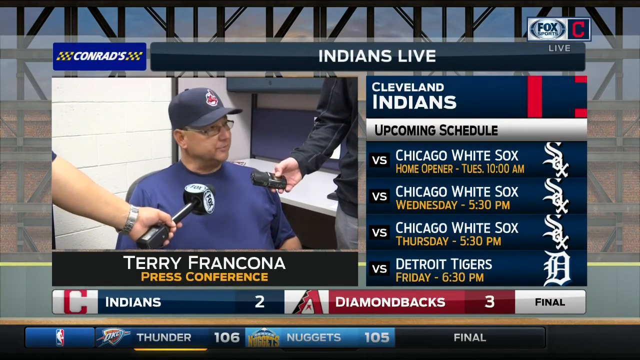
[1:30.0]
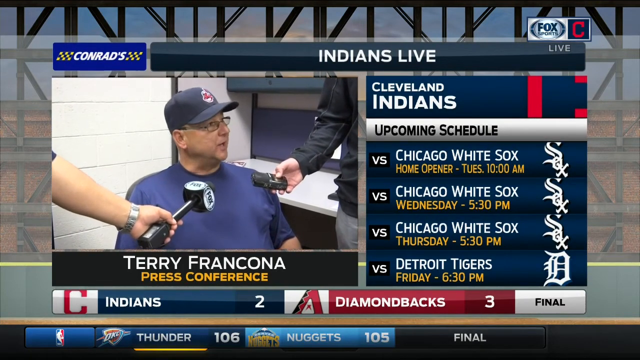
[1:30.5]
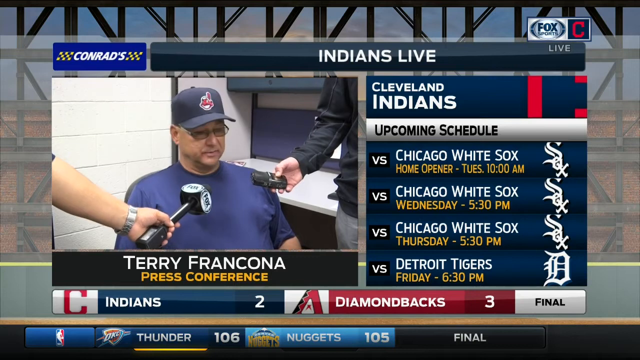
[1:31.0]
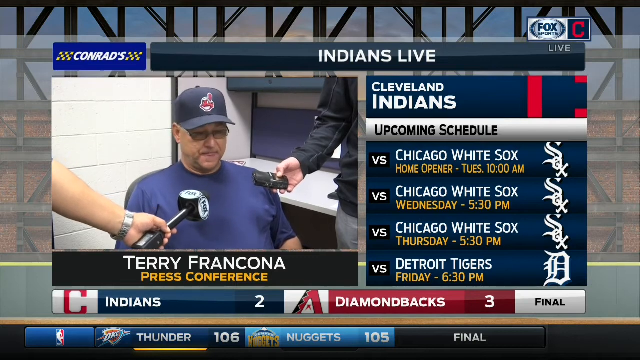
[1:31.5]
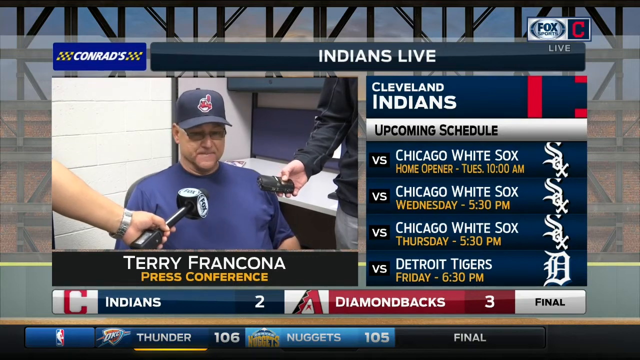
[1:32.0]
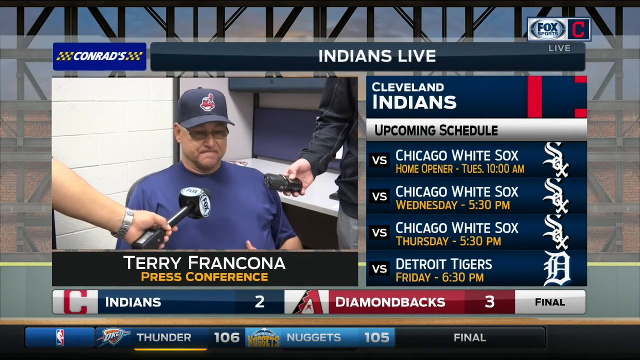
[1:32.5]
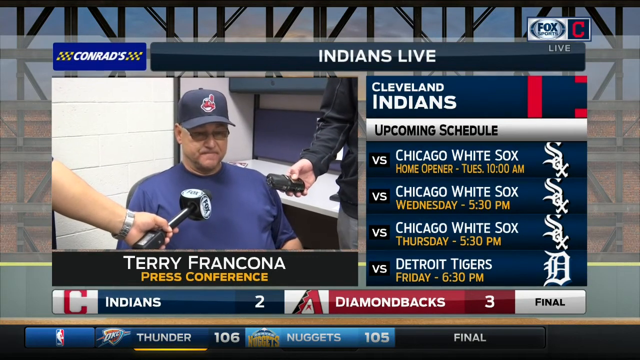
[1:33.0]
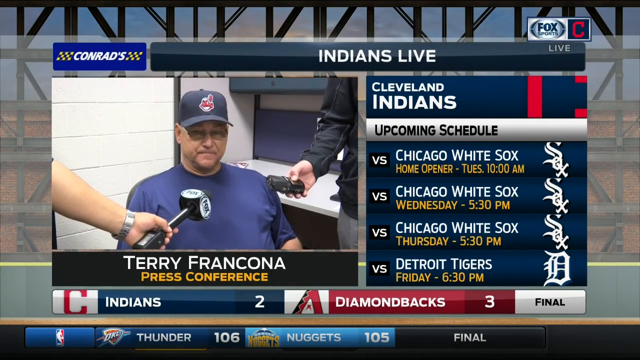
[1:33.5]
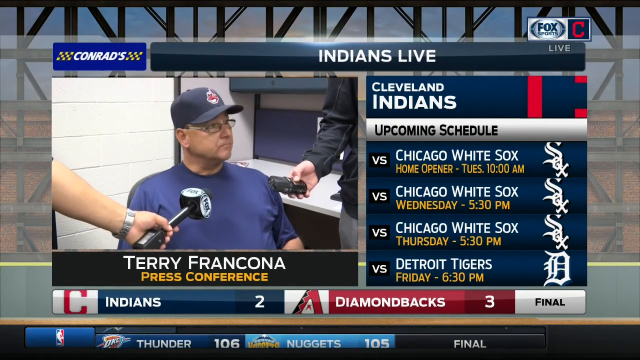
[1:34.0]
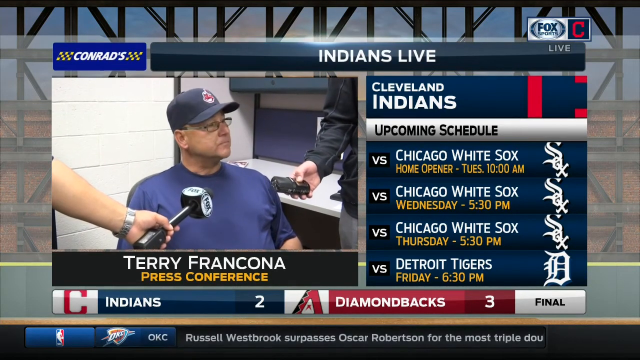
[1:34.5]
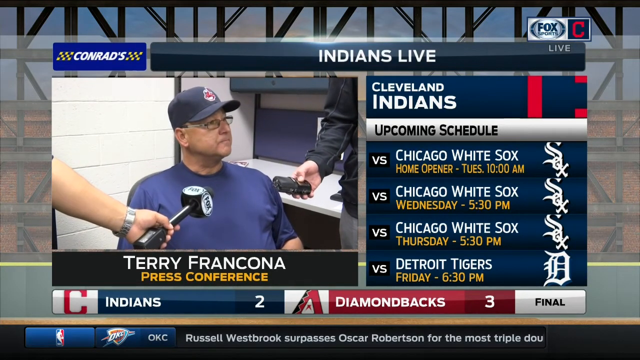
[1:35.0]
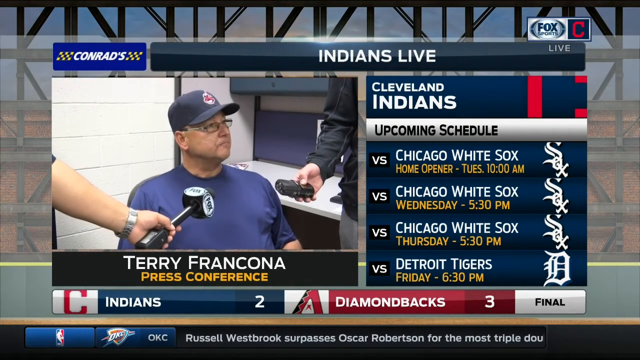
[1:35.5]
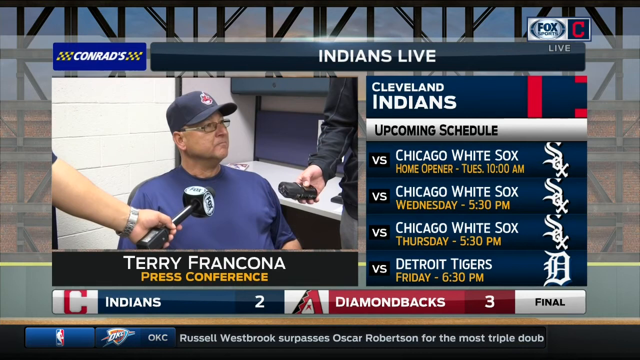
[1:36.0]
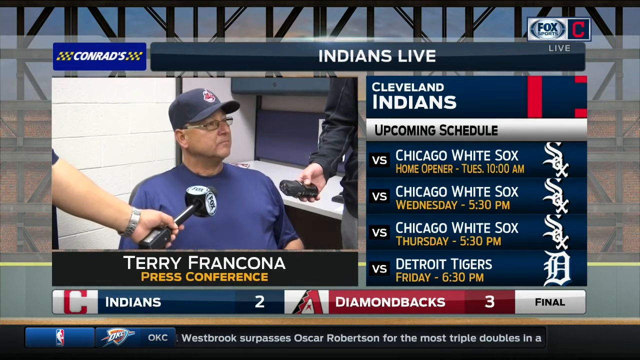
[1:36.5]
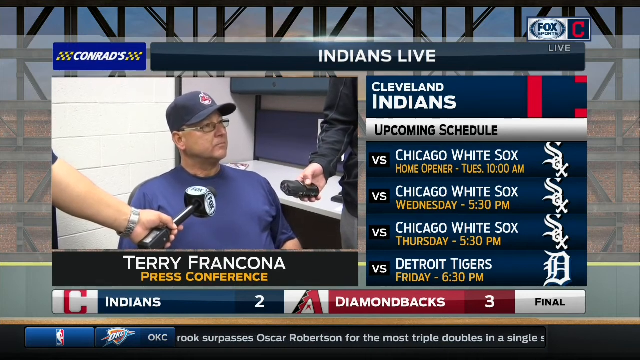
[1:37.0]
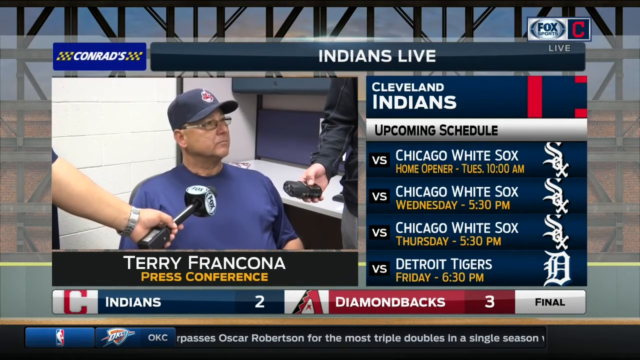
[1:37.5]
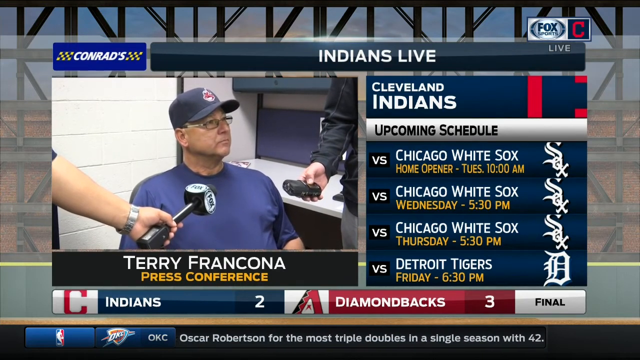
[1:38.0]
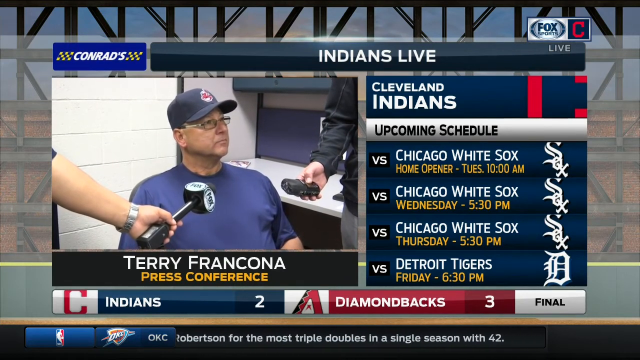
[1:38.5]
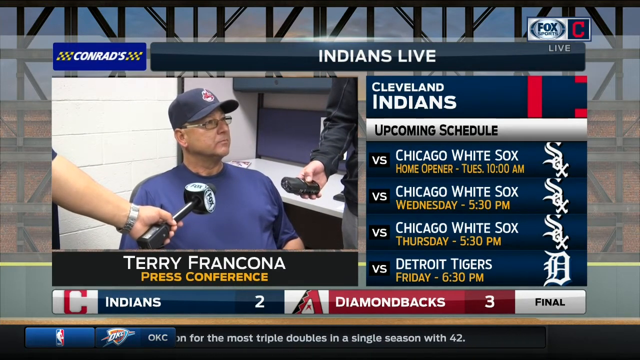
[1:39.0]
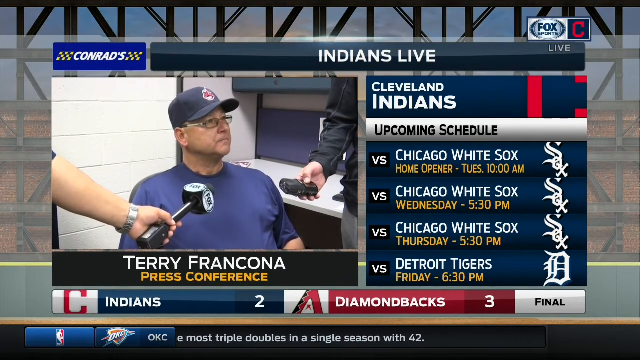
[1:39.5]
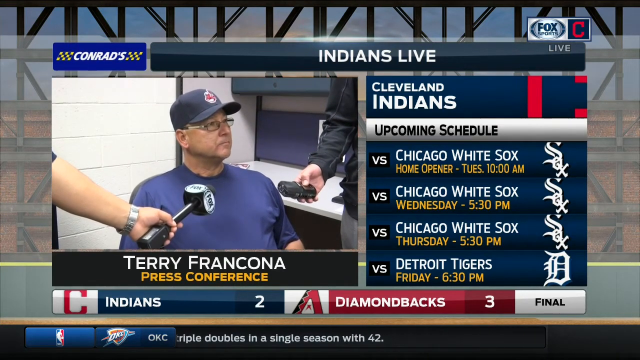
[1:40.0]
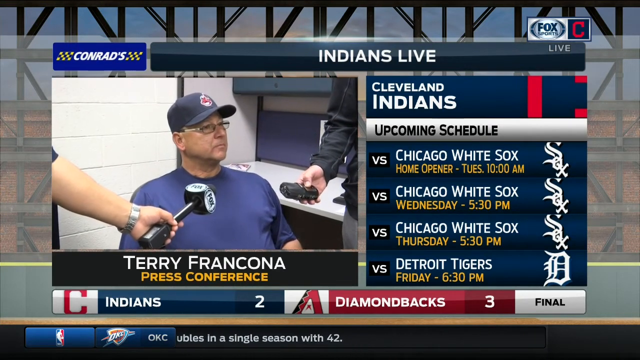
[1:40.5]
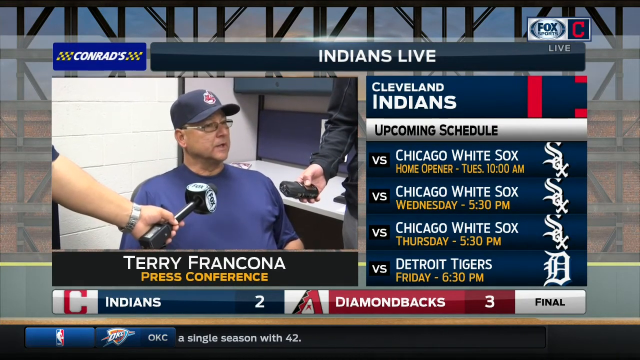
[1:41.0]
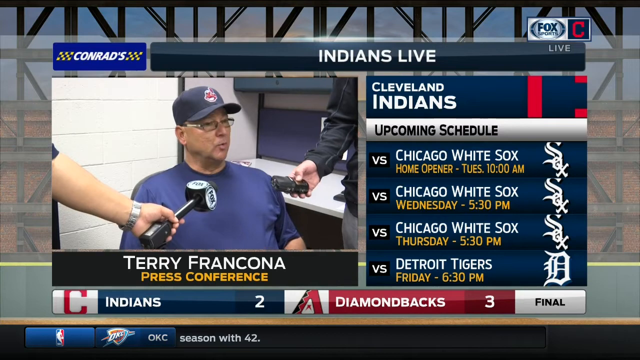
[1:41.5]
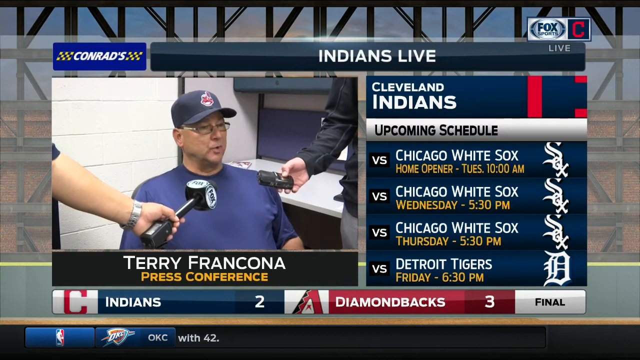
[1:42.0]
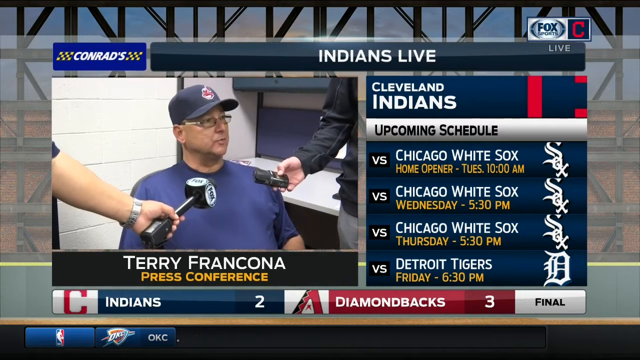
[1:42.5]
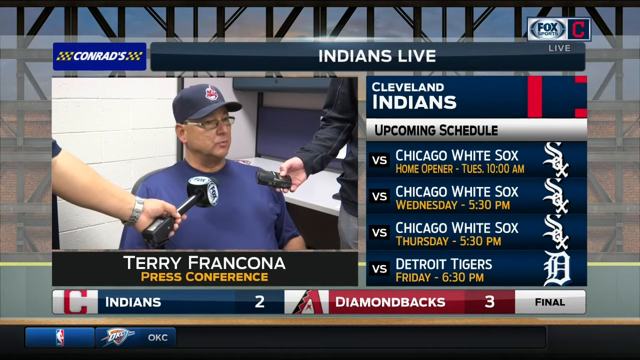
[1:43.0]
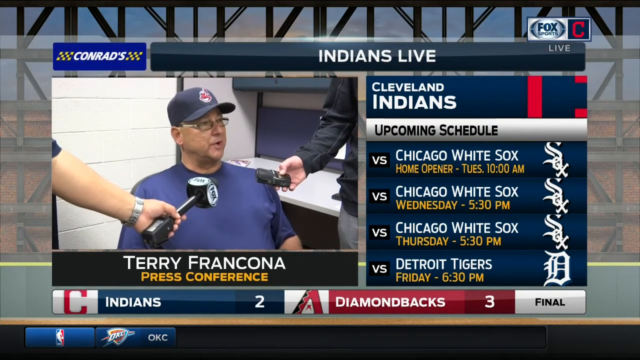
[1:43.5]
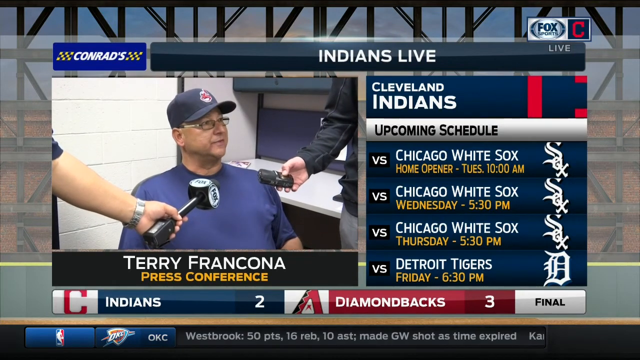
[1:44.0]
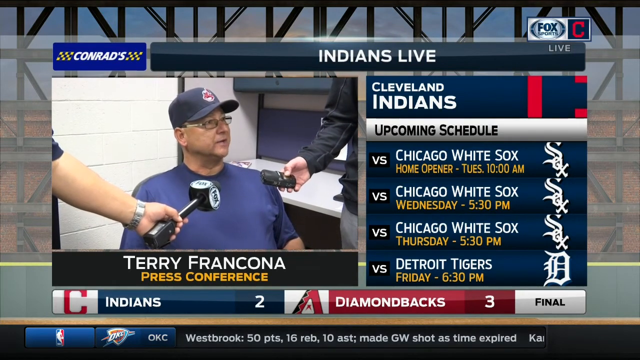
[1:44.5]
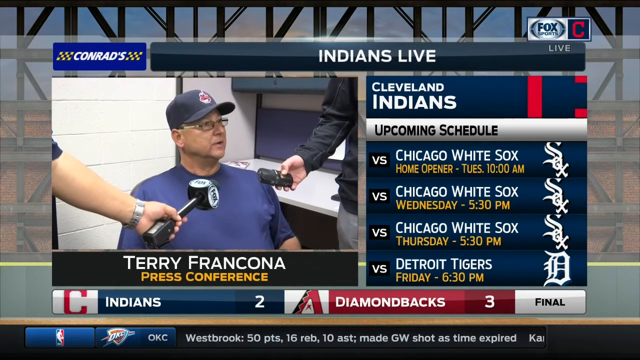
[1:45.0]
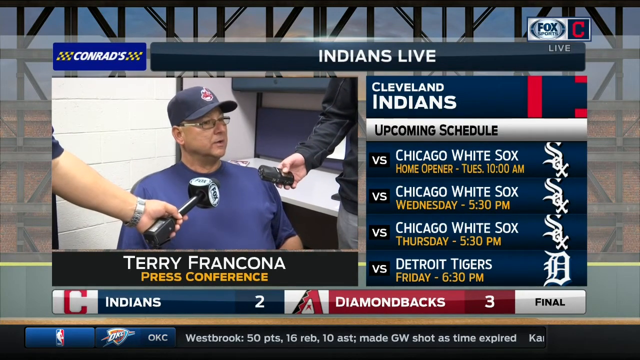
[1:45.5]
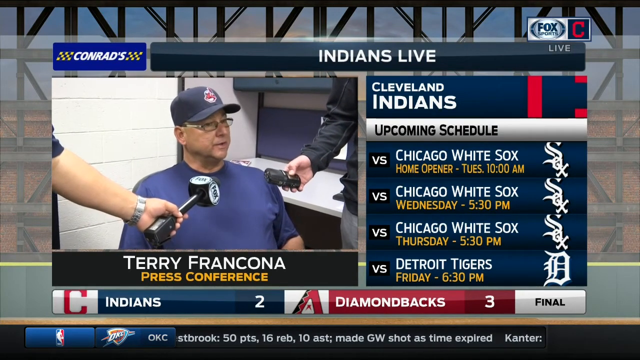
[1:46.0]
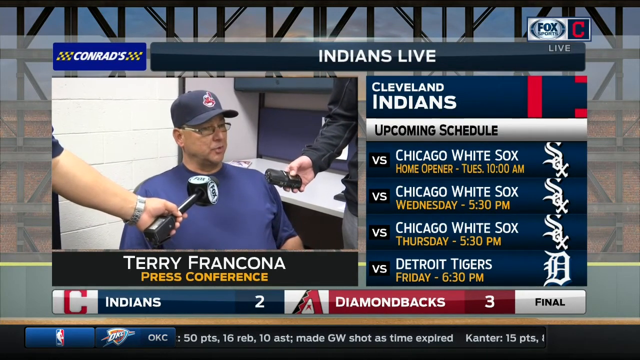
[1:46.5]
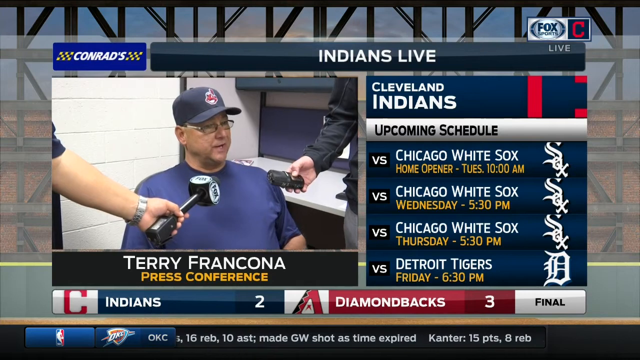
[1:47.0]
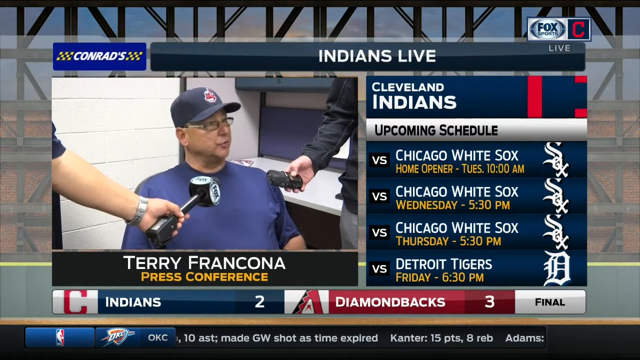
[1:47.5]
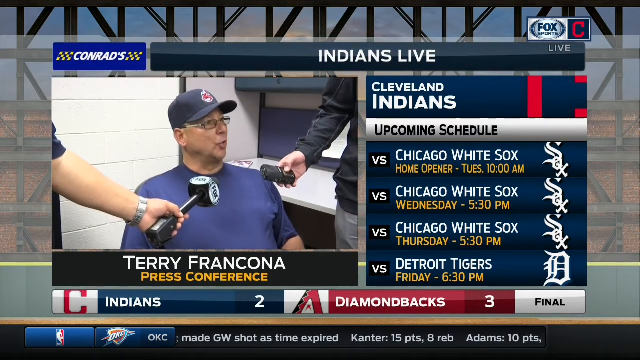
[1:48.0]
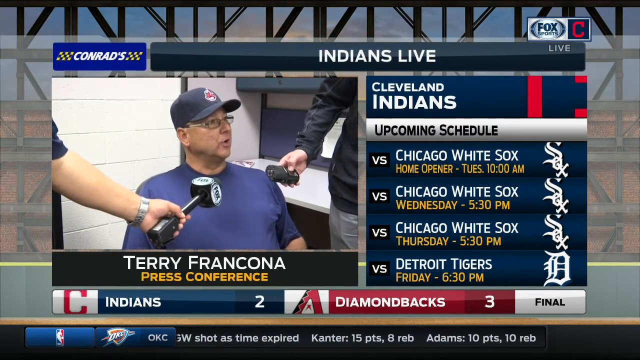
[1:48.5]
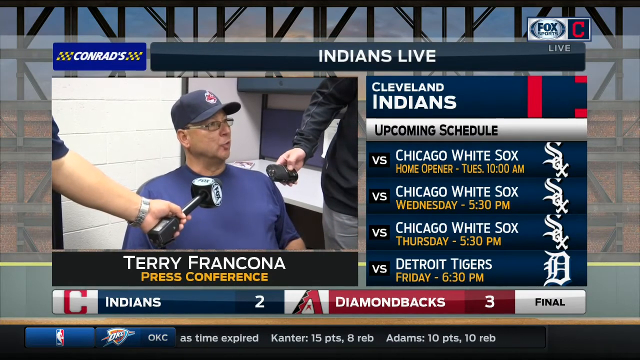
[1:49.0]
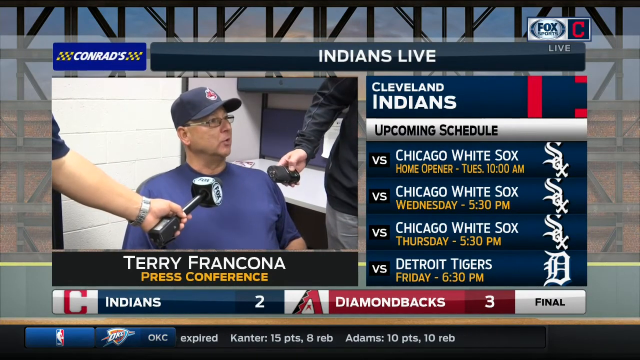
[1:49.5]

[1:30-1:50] Terry Francona is interviewed by several reporters at a press conference after his Cleveland Indians lost to the Diamondbacks 3-2. Francona talks, makes a little face with his mouth, and rocks slightly in his chair while listening. He begins answering while still moving slightly back and forth in the chair, continuing to talk and just barely rocking.